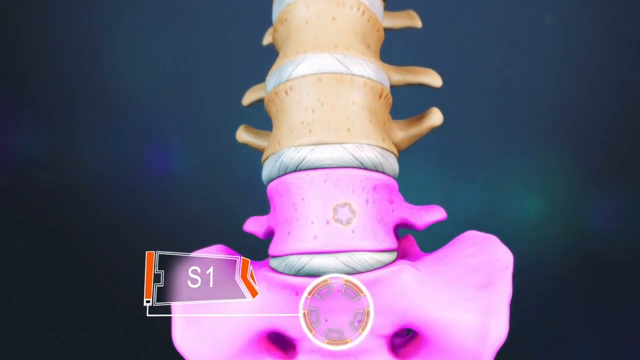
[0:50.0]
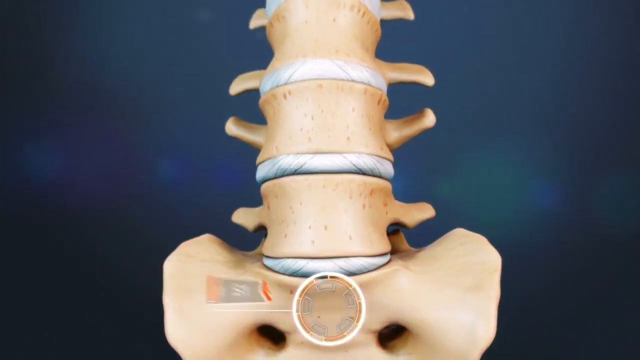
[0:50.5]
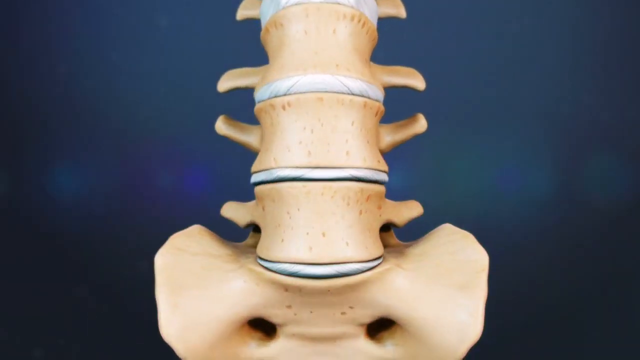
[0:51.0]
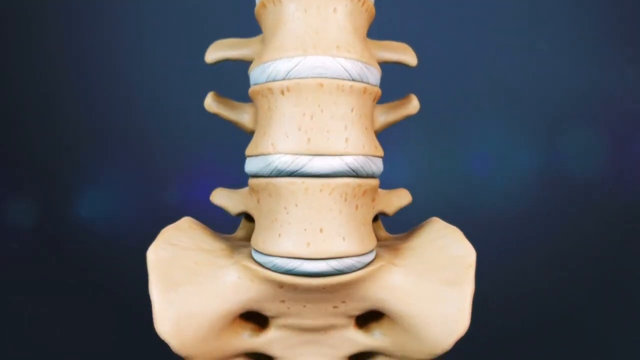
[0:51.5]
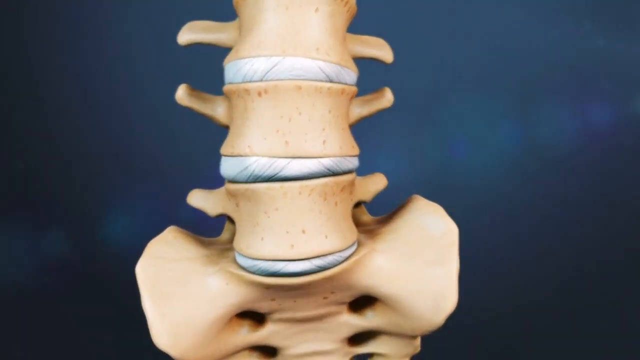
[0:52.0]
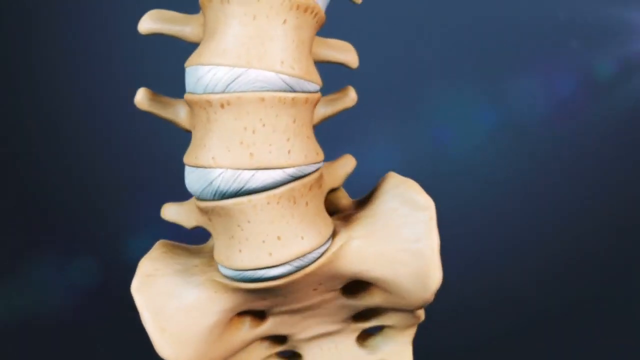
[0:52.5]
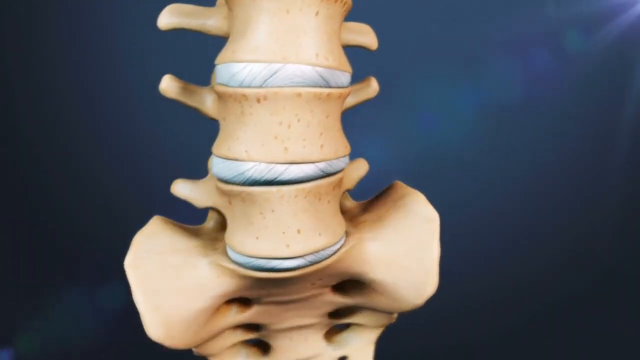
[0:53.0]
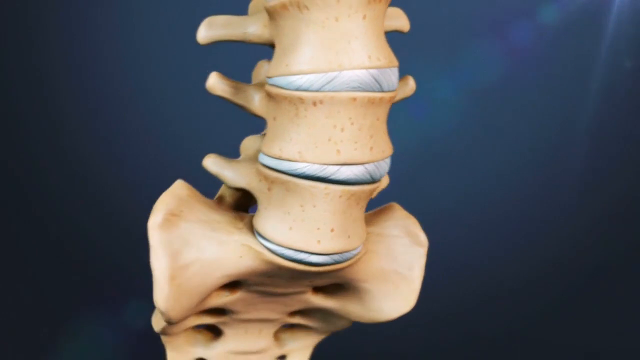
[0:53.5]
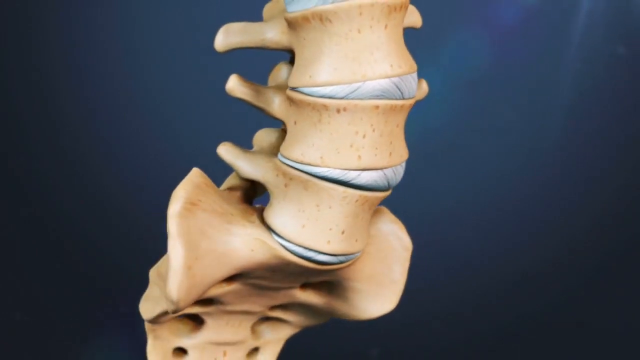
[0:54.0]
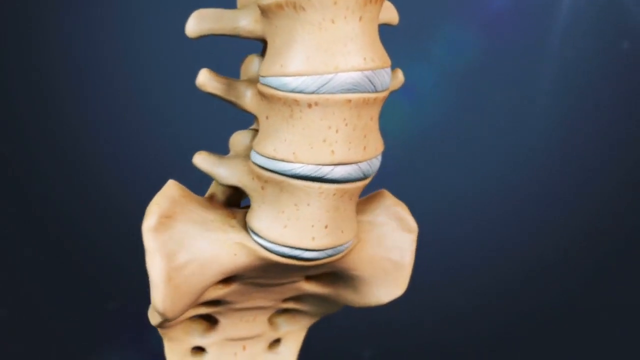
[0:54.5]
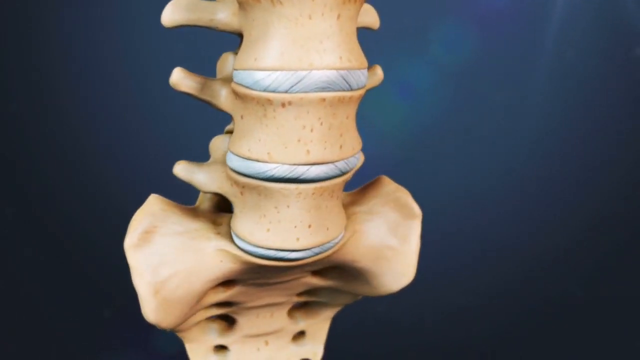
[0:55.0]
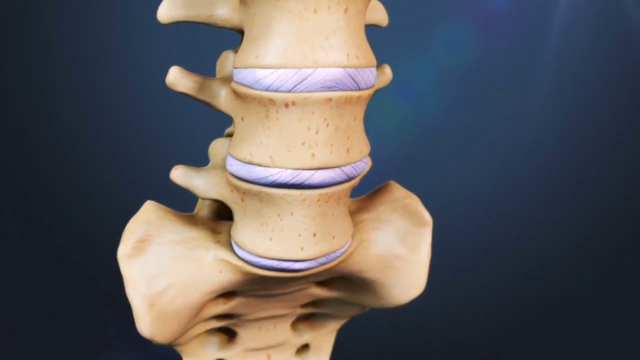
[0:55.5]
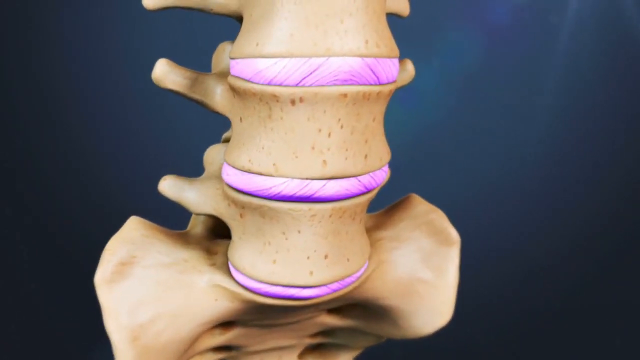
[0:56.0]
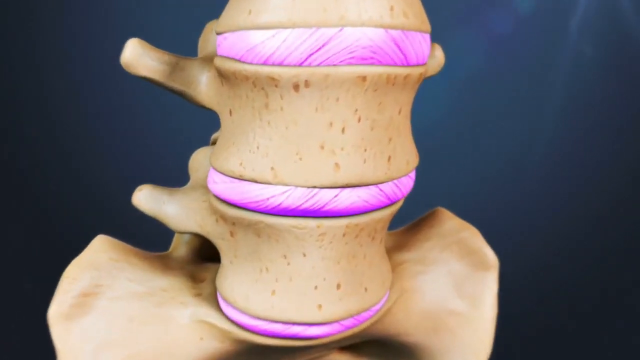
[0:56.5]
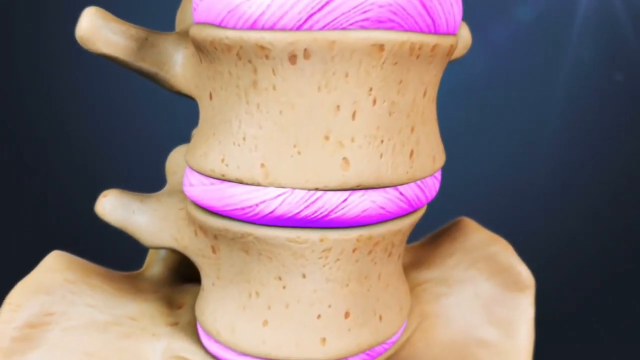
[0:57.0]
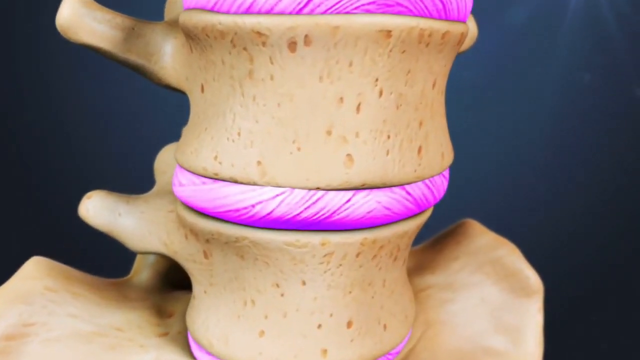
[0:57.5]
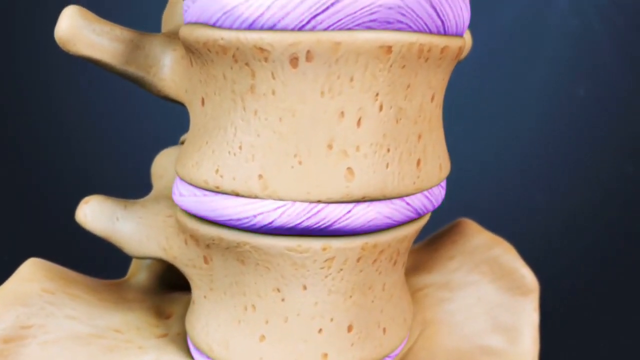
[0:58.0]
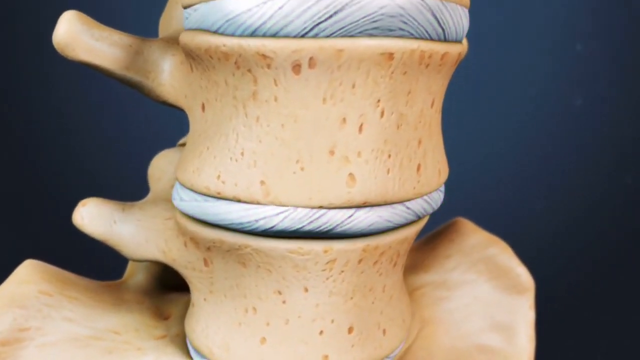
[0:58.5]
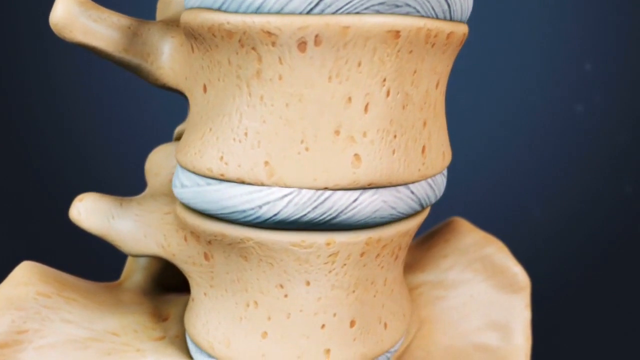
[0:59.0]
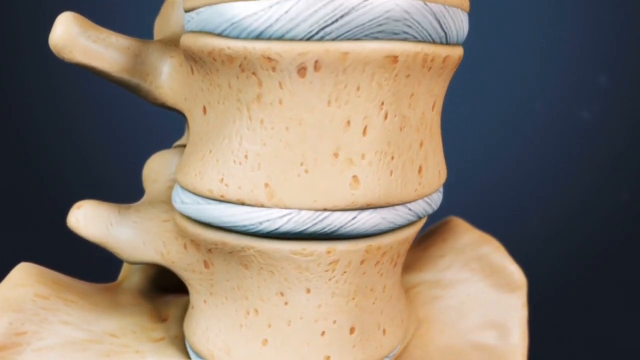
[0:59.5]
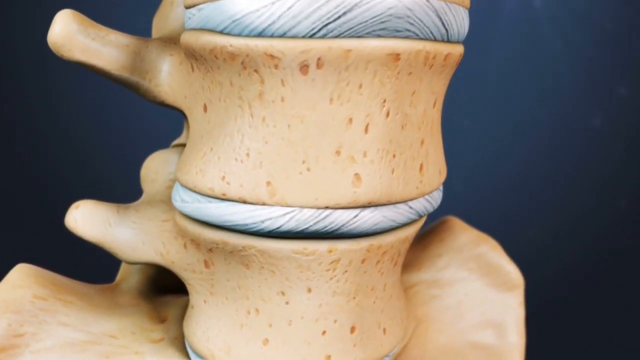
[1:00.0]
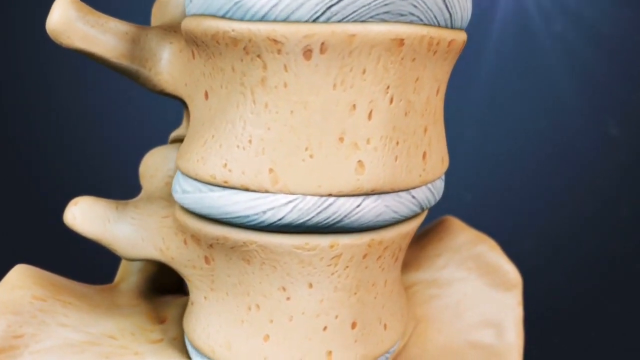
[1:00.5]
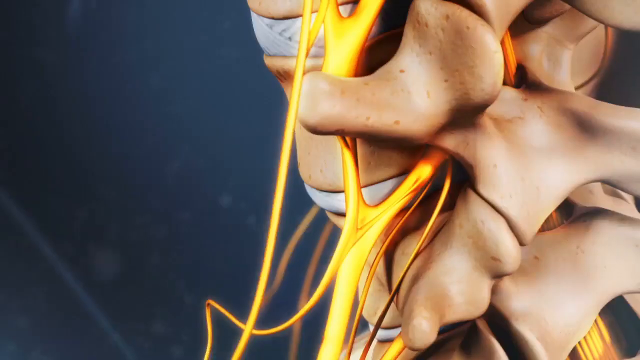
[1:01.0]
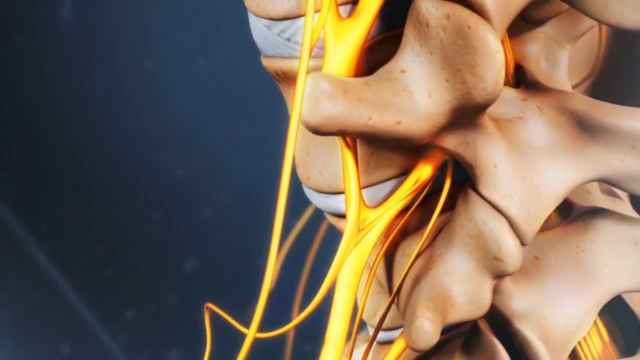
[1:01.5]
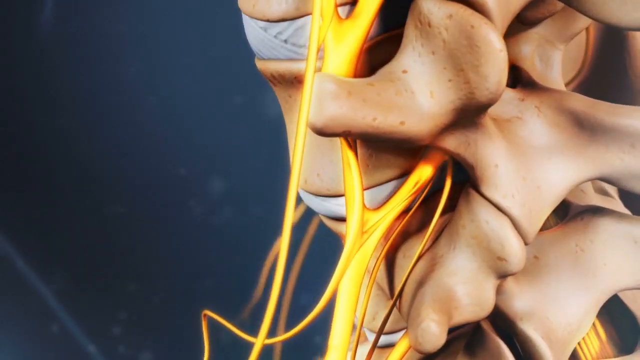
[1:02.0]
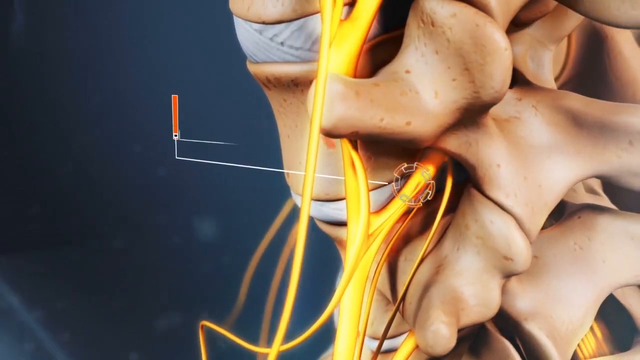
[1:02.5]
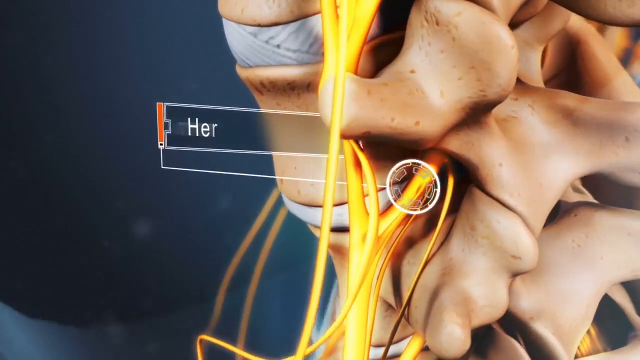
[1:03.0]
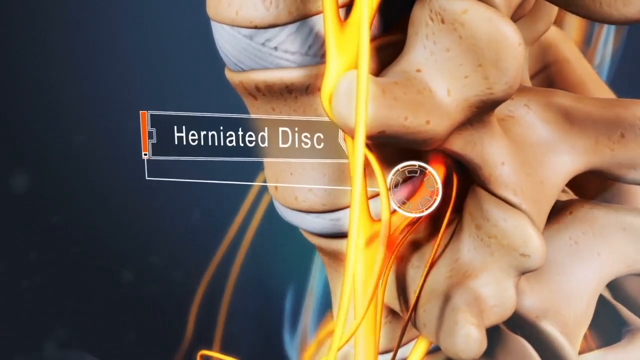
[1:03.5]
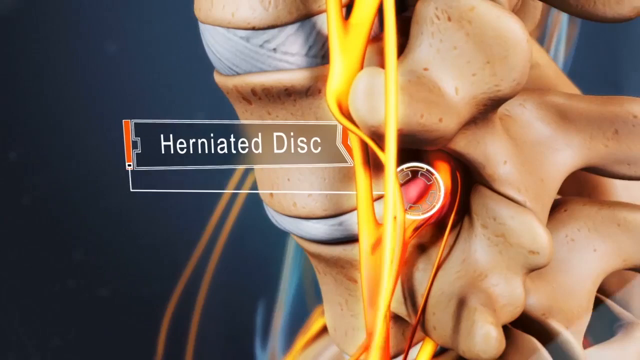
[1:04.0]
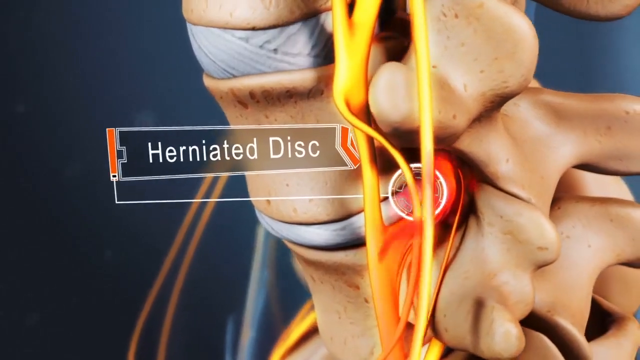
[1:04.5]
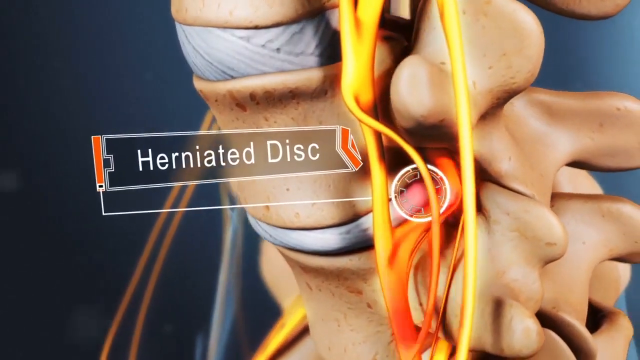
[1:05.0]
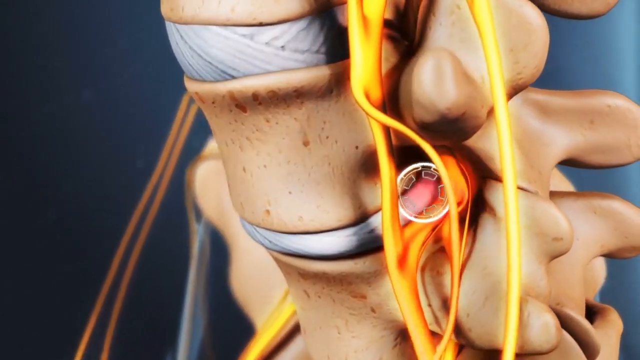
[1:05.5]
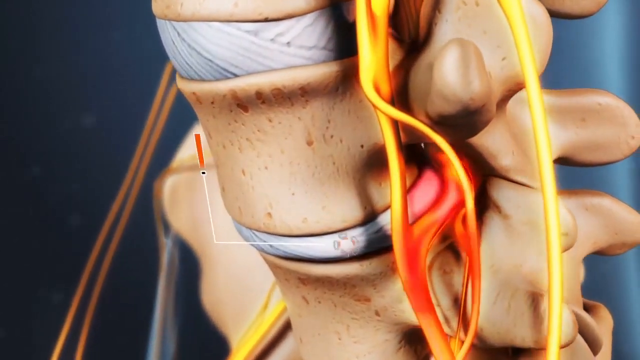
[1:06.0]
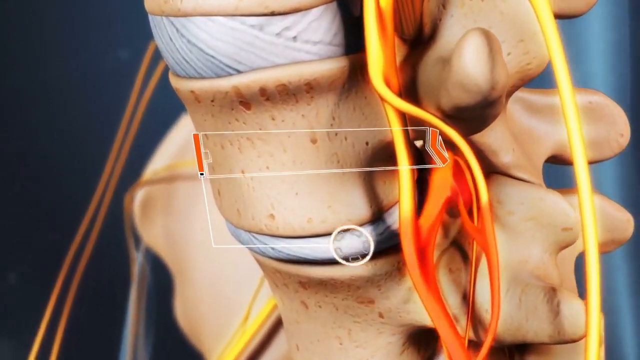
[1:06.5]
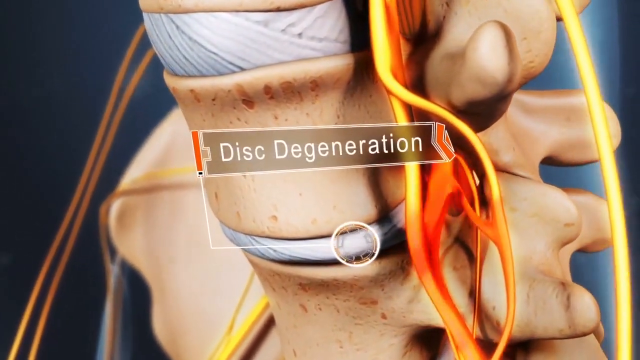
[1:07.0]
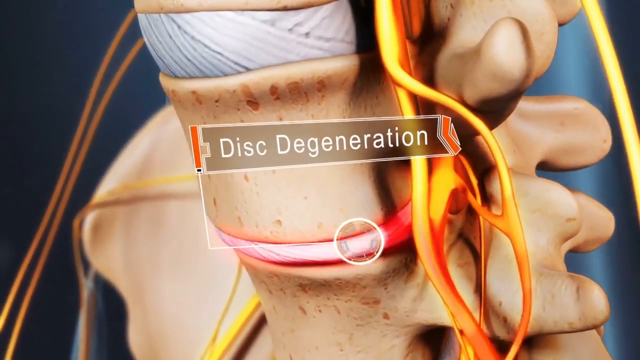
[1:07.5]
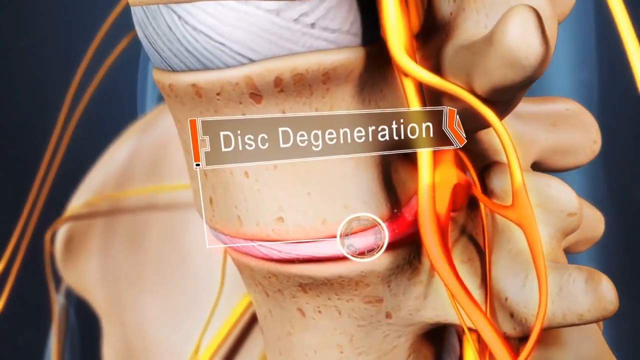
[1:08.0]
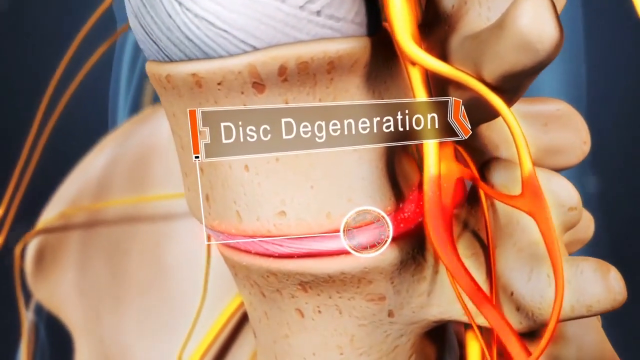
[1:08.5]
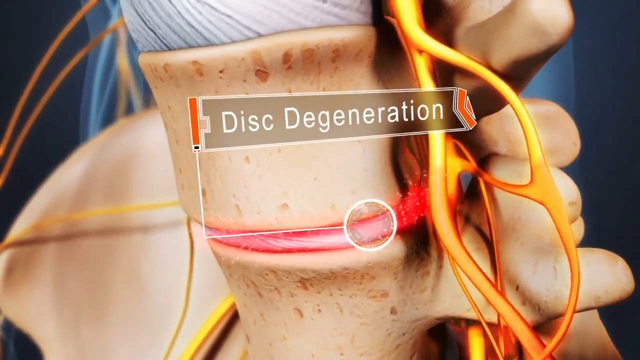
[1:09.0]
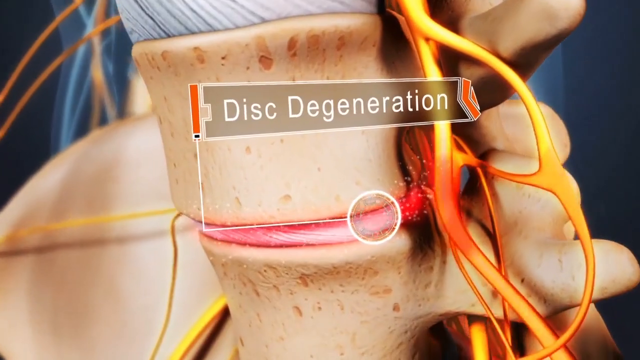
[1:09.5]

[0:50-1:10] The view continues to move and pan over the body as the computer image of the skeleton begins to move around a little to show how the bones move. The ligaments between the bones are highlighted in pink, and the view zooms in a bit on them as they stretch and compress up and down. It then moves on to other ligaments around the spine with a label reading "herniated disc," and another label, as it zooms out, reading "disc degeneration." The bone moves up and down around the ligaments as the hernia and the degeneration are highlighted.